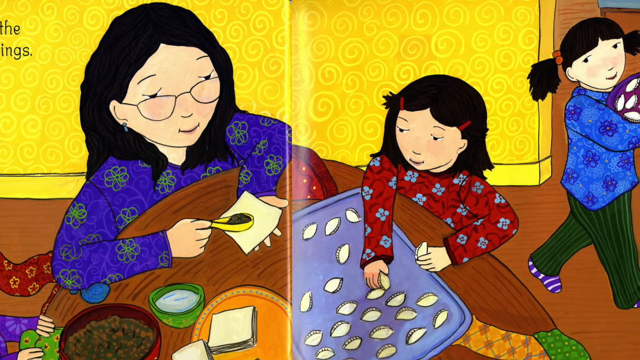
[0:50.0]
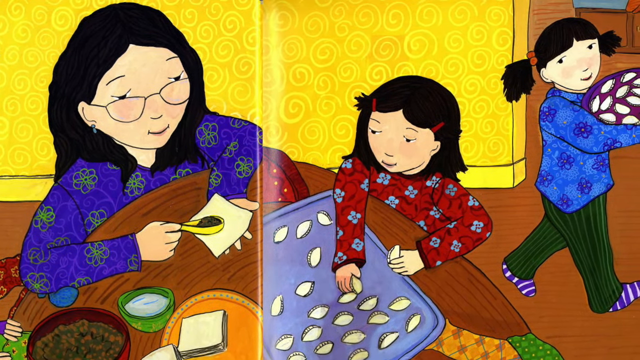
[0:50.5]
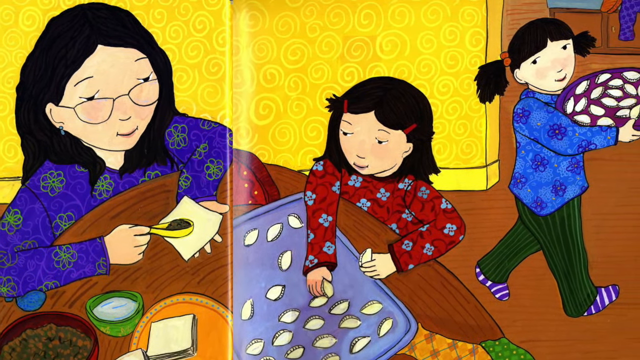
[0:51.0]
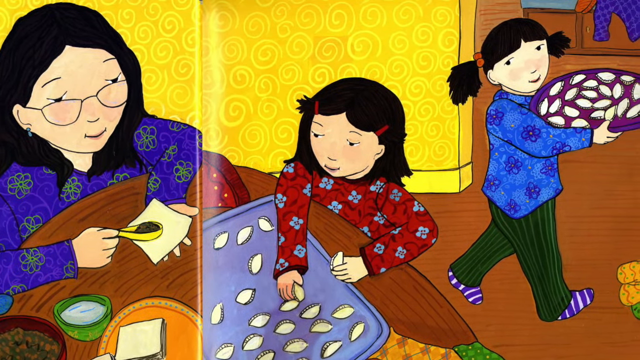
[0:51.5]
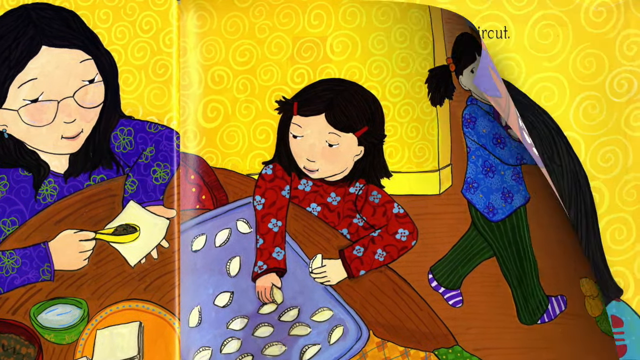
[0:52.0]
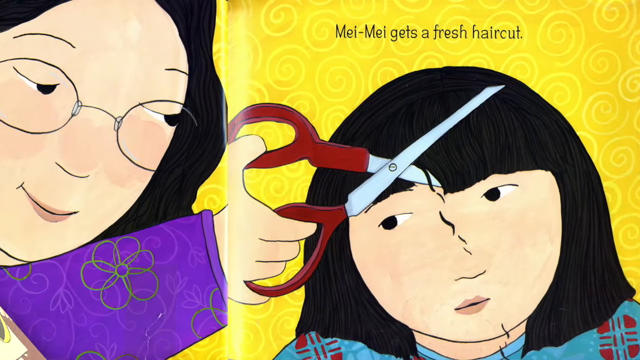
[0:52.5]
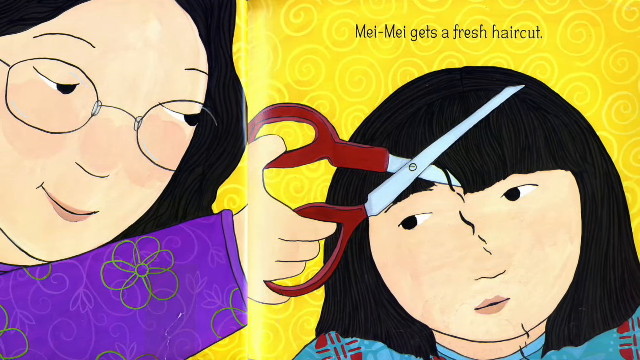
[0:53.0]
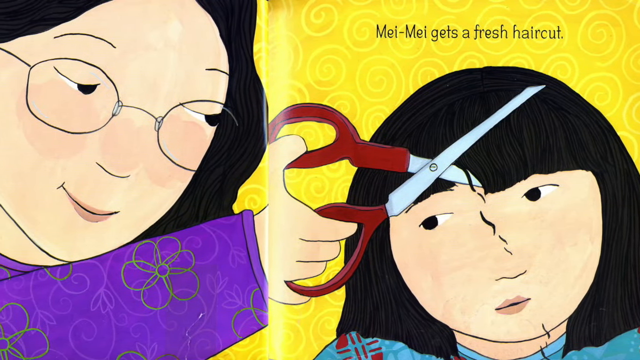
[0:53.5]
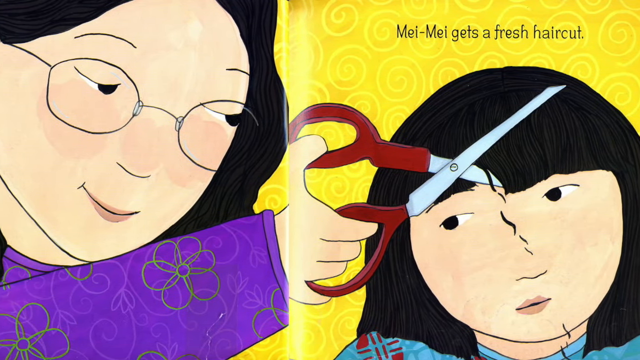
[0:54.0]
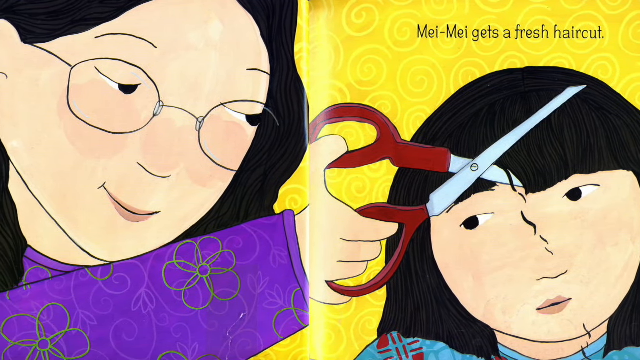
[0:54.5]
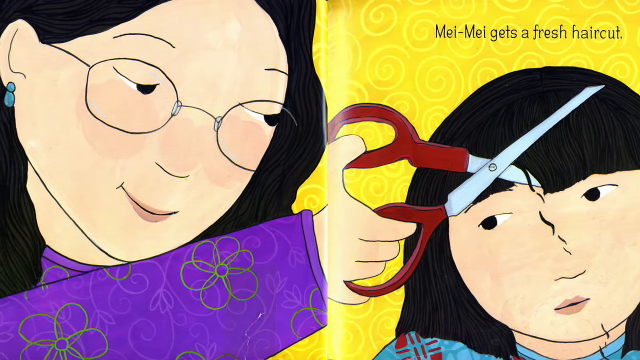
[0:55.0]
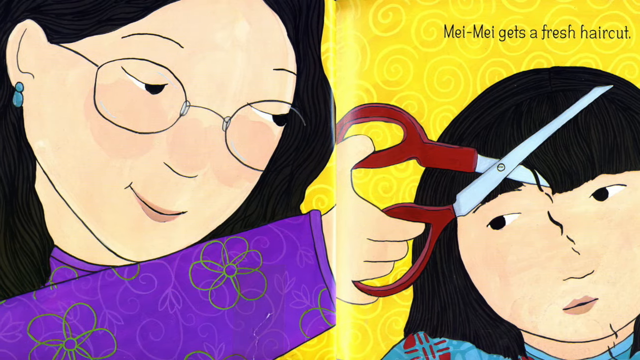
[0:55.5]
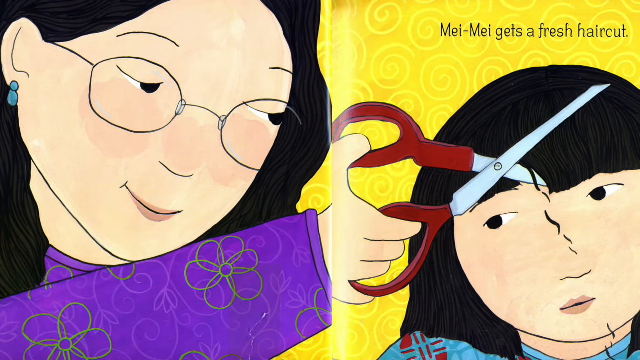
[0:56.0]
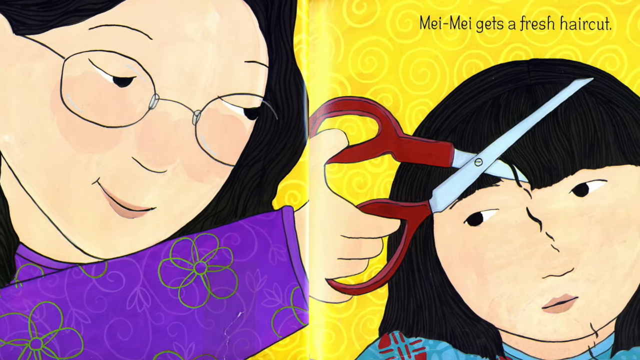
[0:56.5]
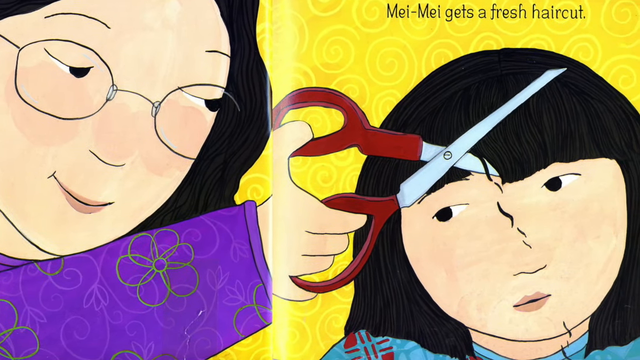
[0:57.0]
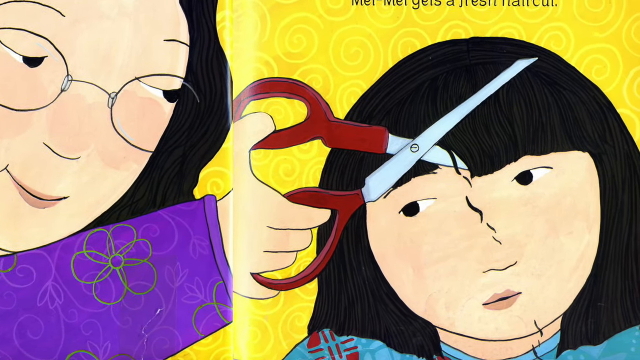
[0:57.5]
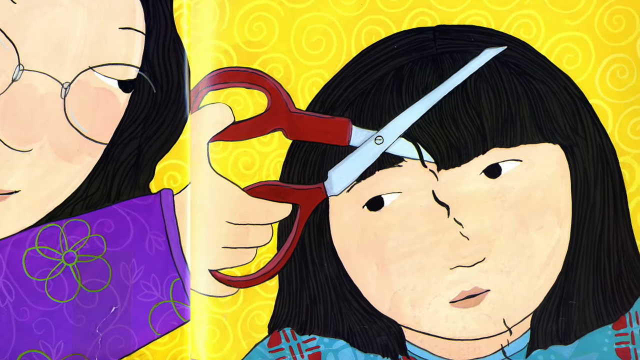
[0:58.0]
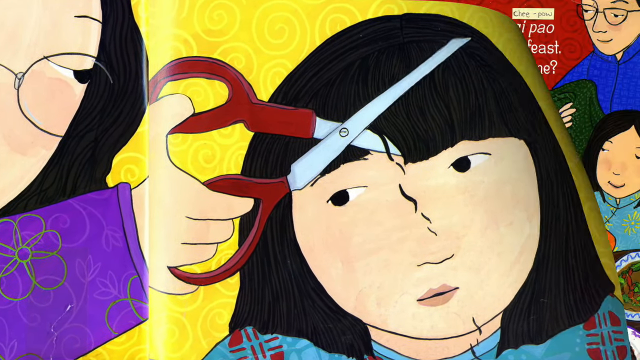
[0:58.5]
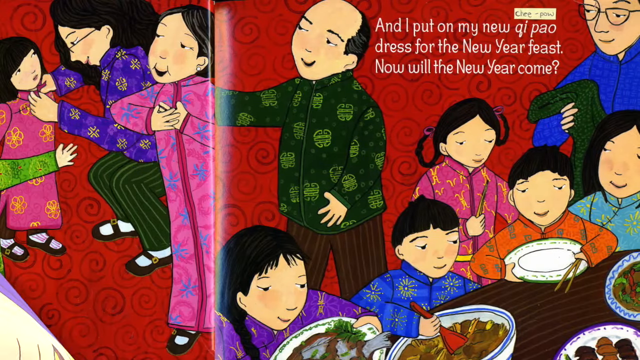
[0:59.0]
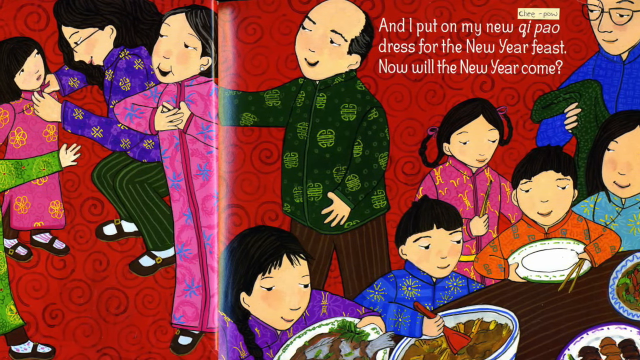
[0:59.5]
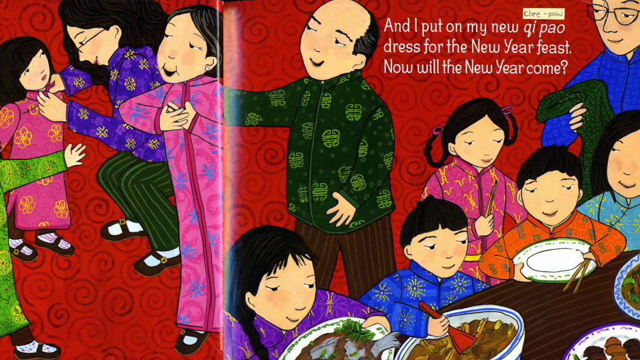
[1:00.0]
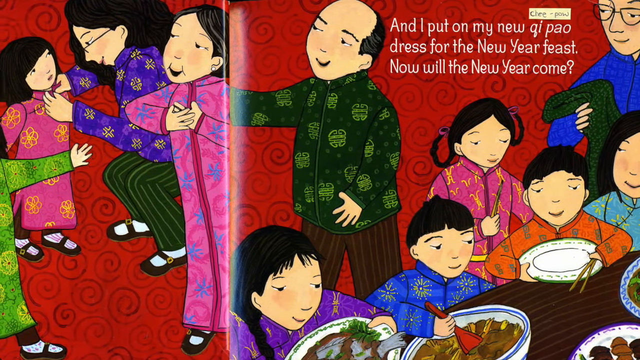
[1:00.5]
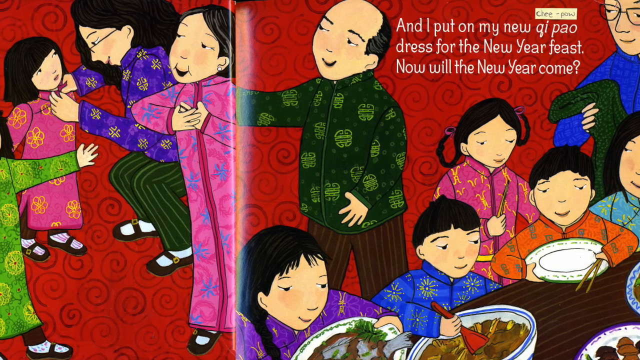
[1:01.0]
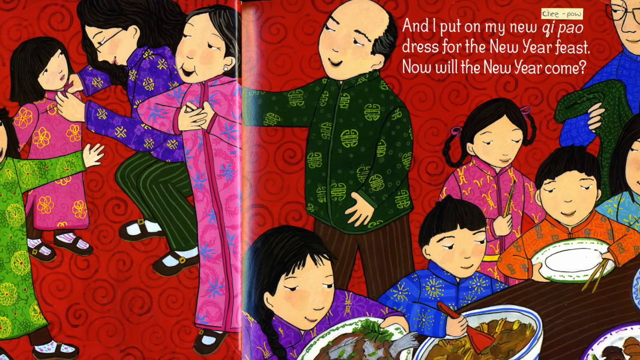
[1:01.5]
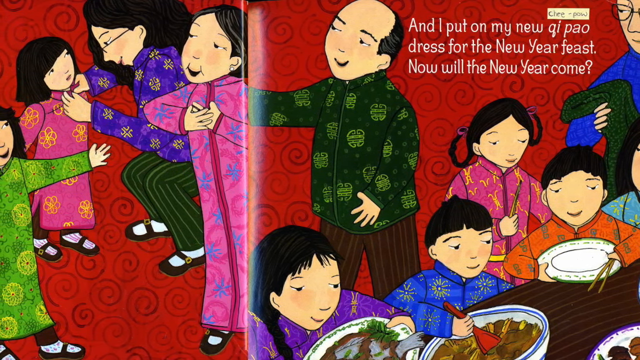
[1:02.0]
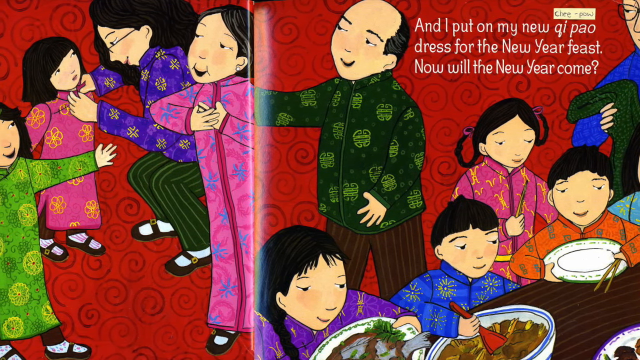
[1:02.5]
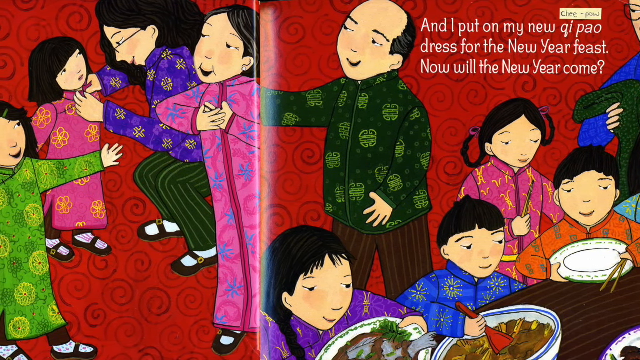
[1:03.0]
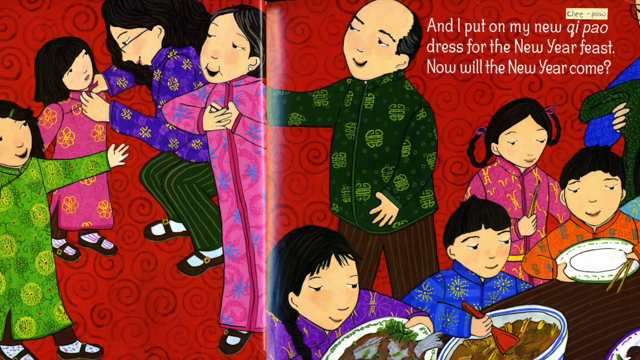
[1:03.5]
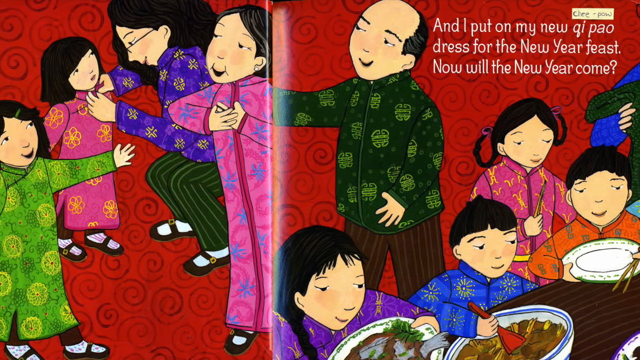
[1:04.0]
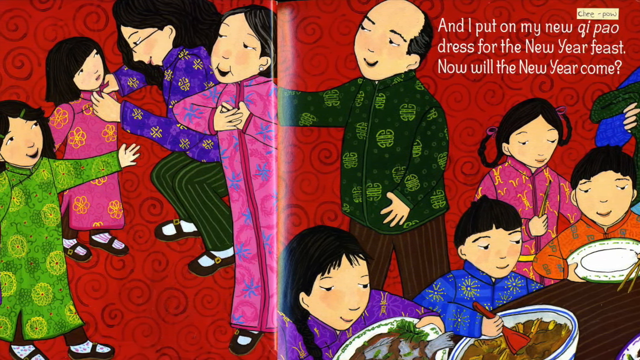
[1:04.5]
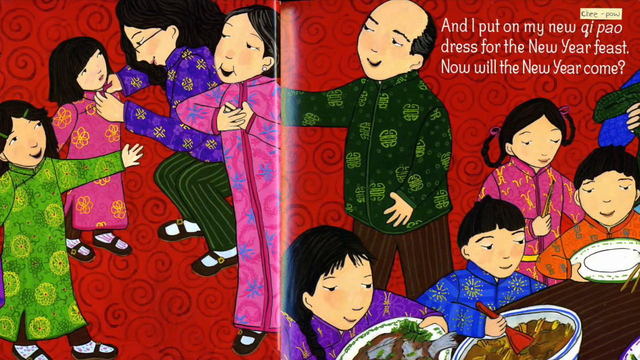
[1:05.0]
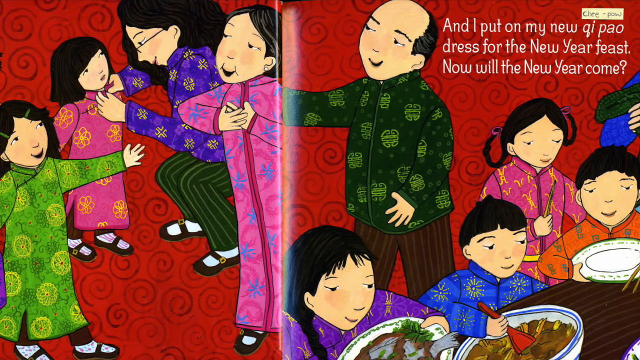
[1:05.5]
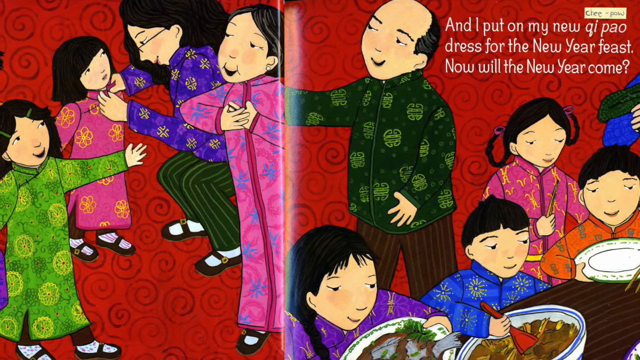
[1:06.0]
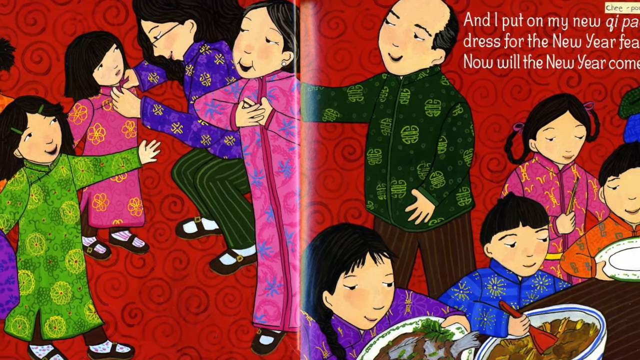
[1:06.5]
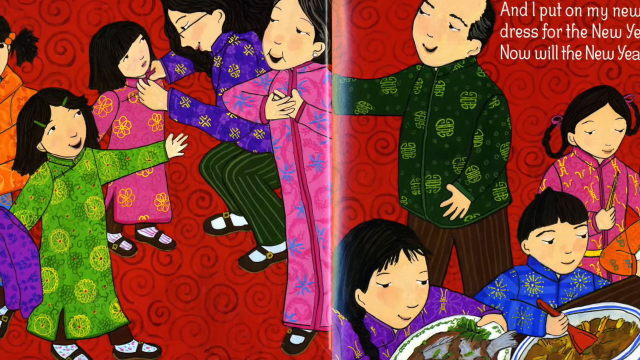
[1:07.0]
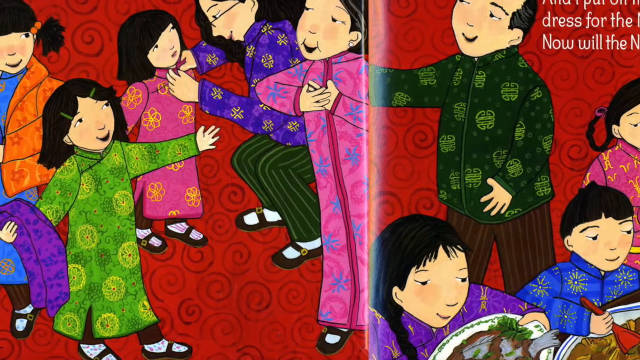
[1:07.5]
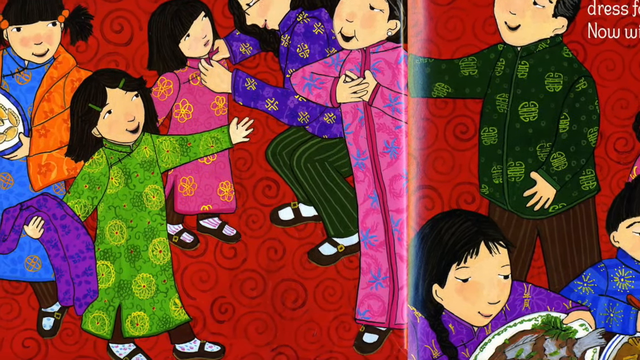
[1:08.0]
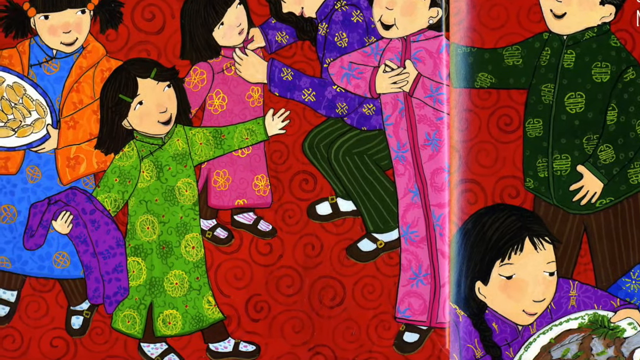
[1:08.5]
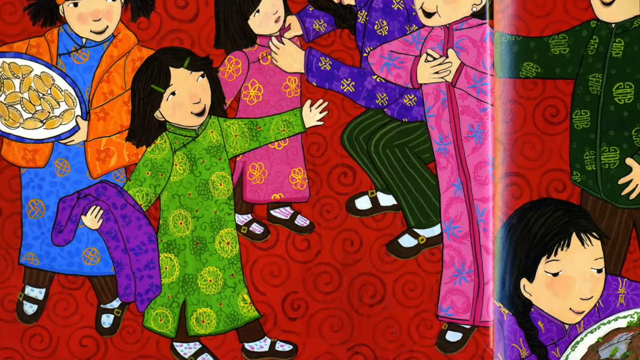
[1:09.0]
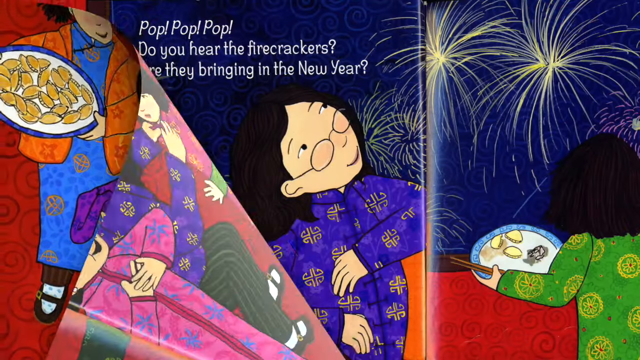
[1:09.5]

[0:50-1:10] Mama is making the get rich dumplings. On the right, a child helps Mama put the dumplings in a pan, and a child even farther to the right looks like she is running away with some of the dumplings. The page turns, and on the left Mama gives Mei Mei a haircut; above Mei Mei the text reads "Mei Mei gets a fresh haircut." The next page reveals the entire family on a red background: more than just the three children, with a boy, another girl, a grandfather and a grandmother. The words on the right read "and I put on my new qi pao dress for the new year feast. Now will the new year come?" The view zooms in on a girl wearing a new green outfit.